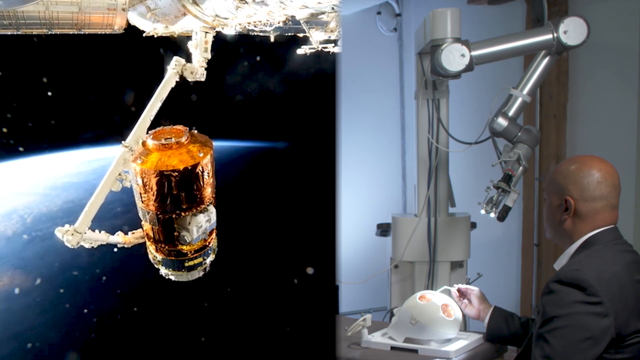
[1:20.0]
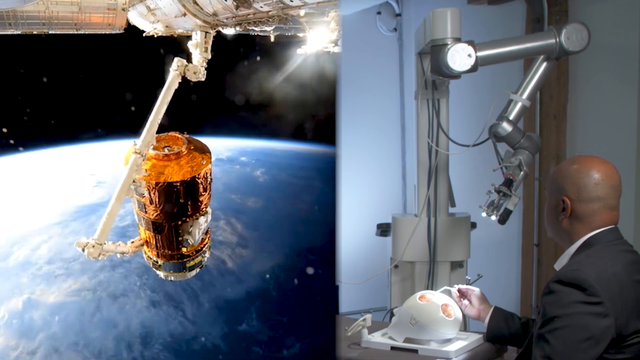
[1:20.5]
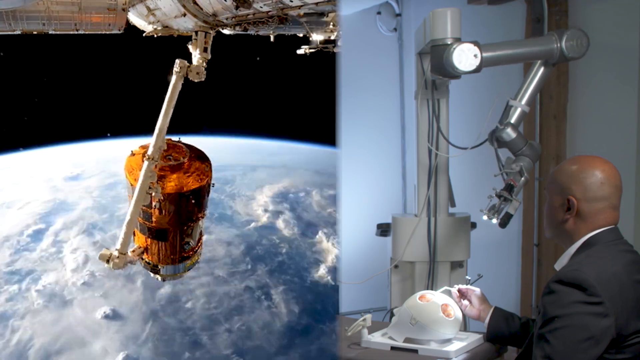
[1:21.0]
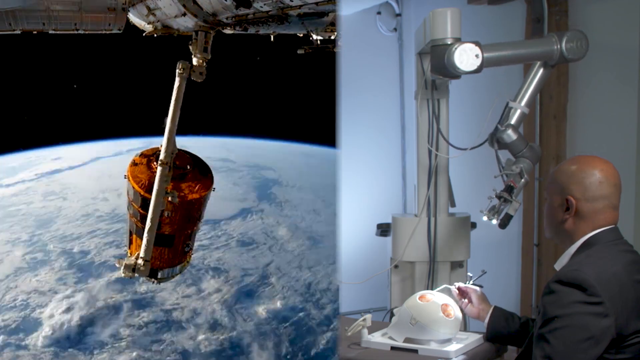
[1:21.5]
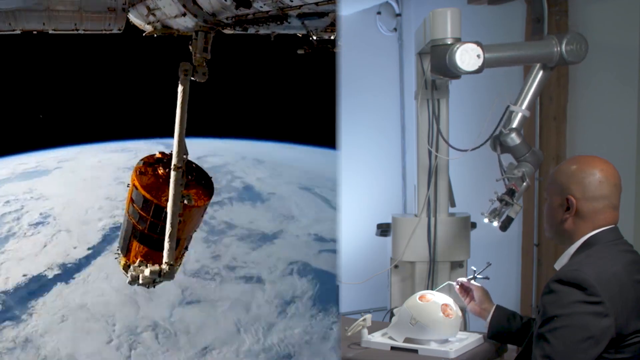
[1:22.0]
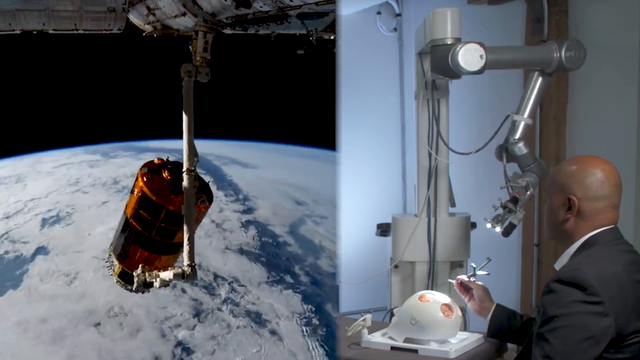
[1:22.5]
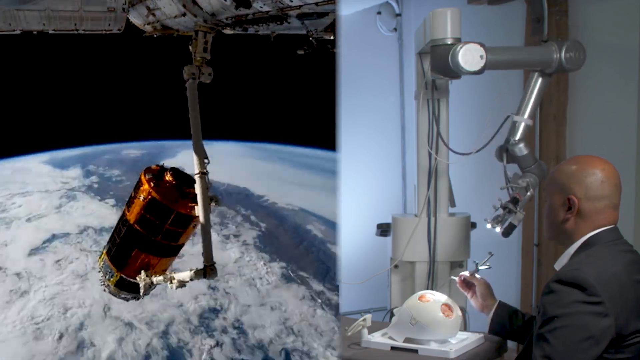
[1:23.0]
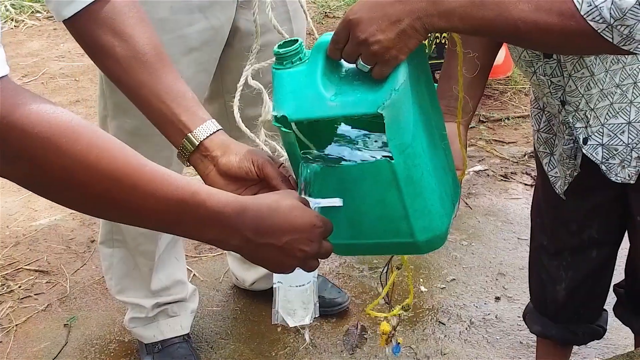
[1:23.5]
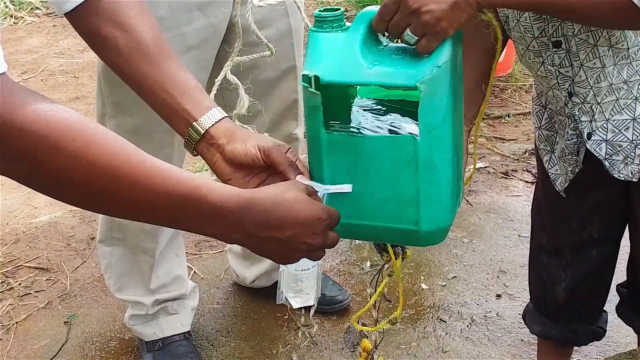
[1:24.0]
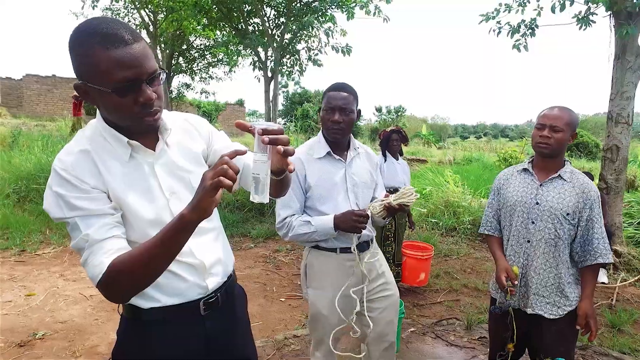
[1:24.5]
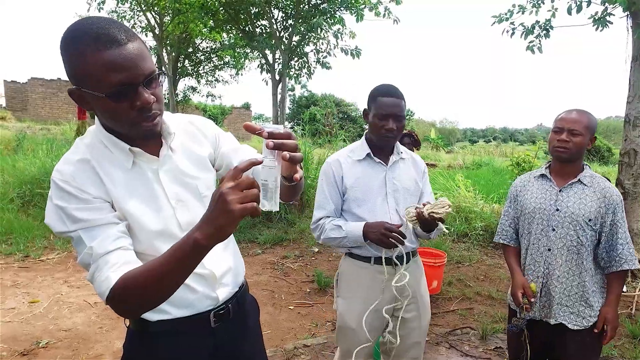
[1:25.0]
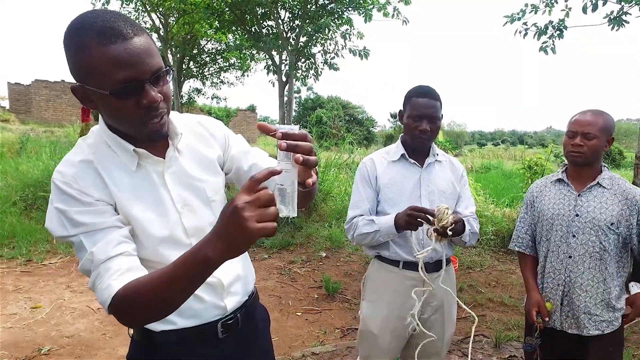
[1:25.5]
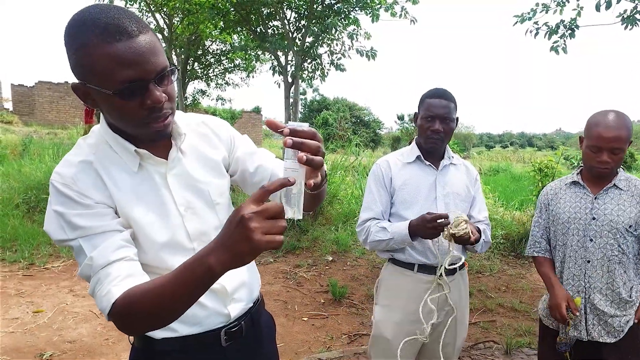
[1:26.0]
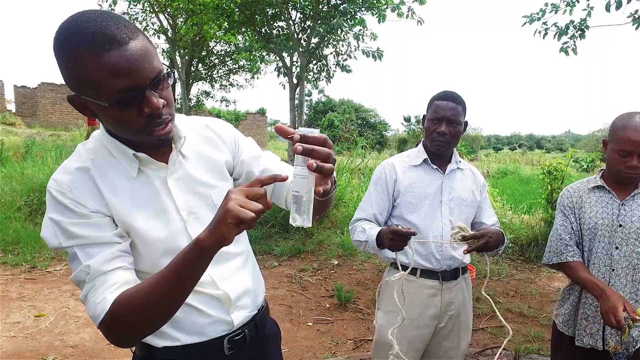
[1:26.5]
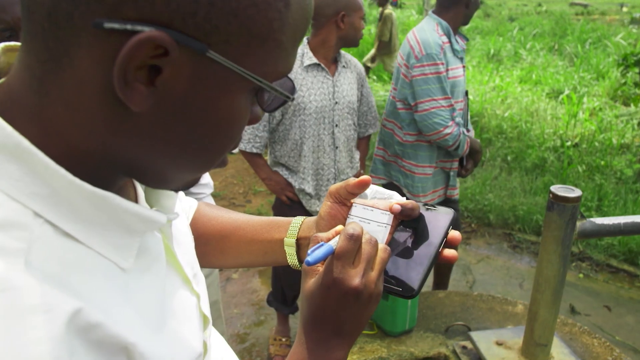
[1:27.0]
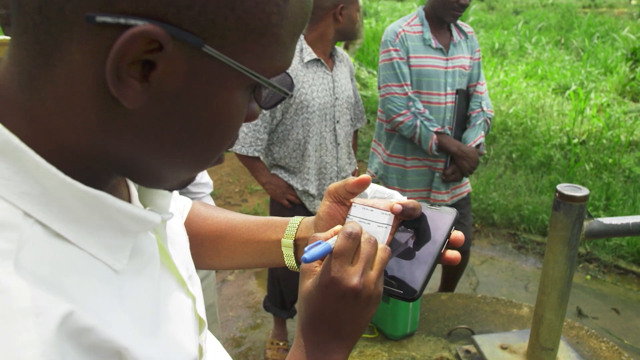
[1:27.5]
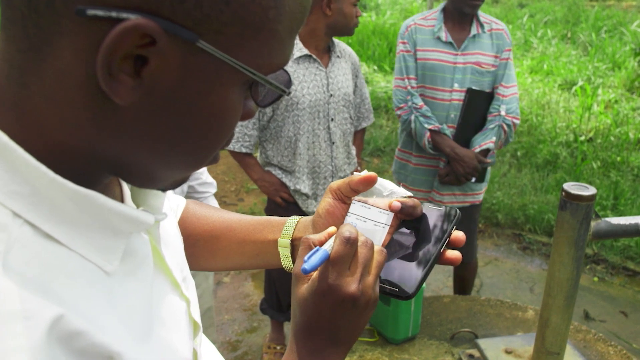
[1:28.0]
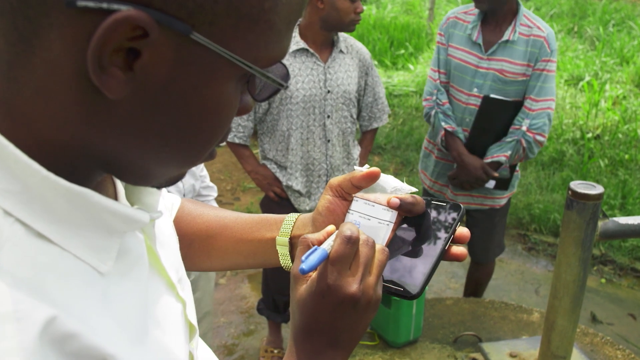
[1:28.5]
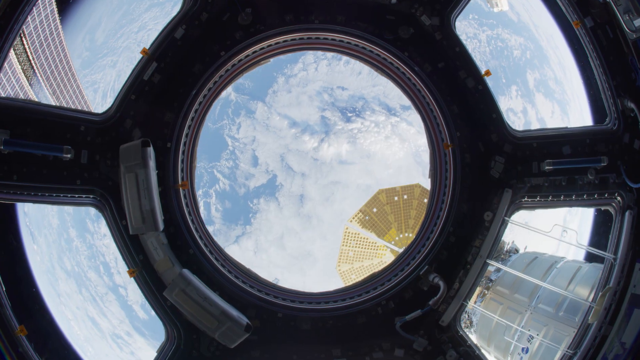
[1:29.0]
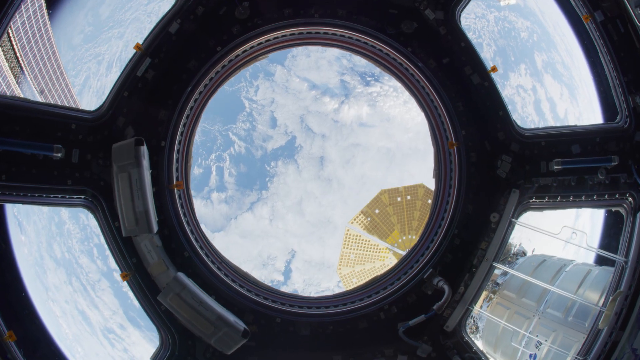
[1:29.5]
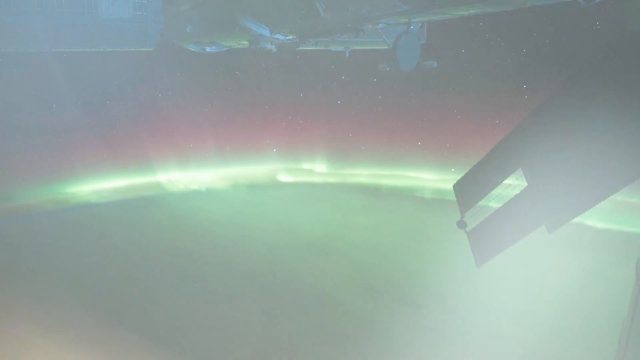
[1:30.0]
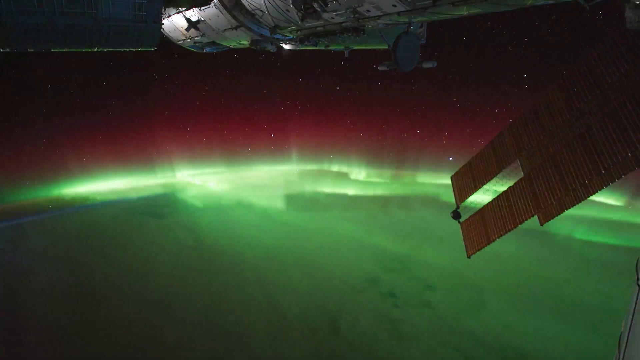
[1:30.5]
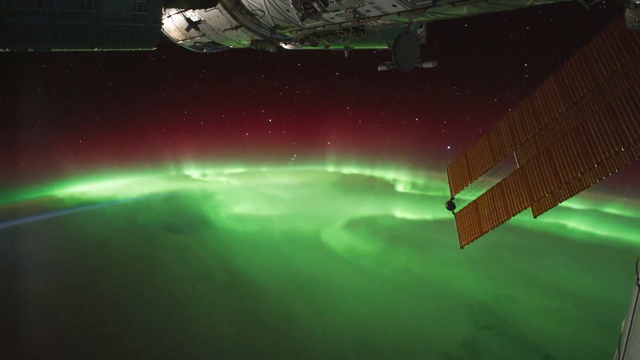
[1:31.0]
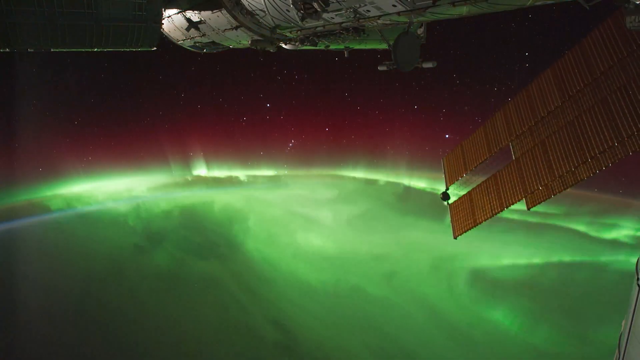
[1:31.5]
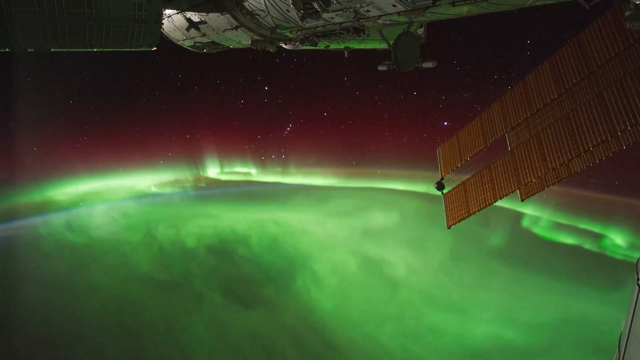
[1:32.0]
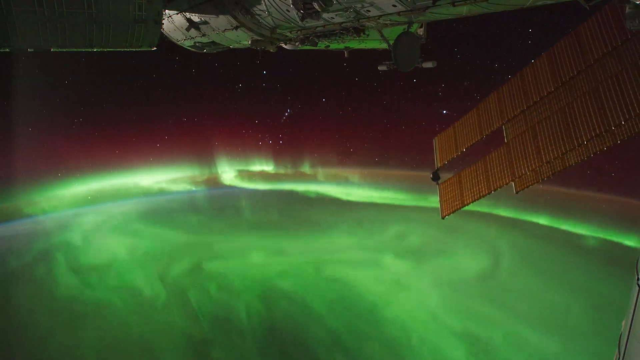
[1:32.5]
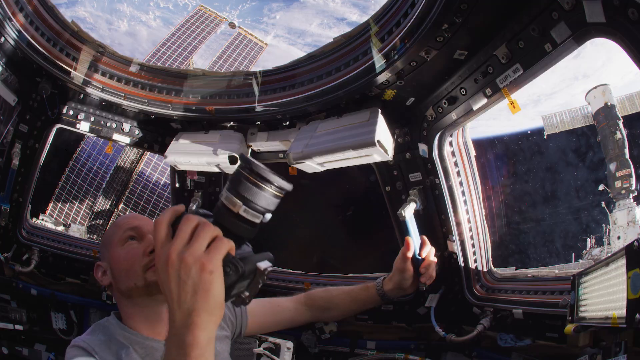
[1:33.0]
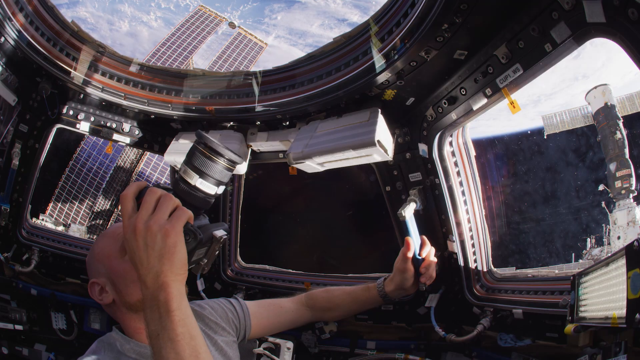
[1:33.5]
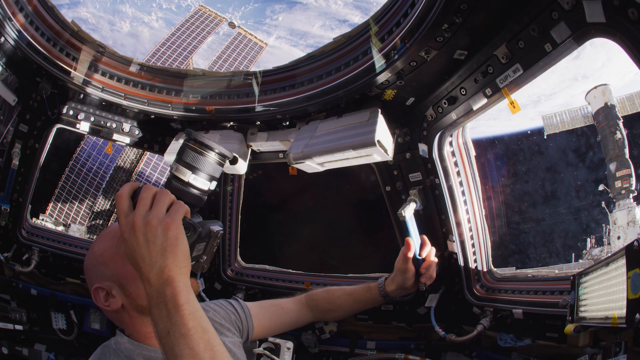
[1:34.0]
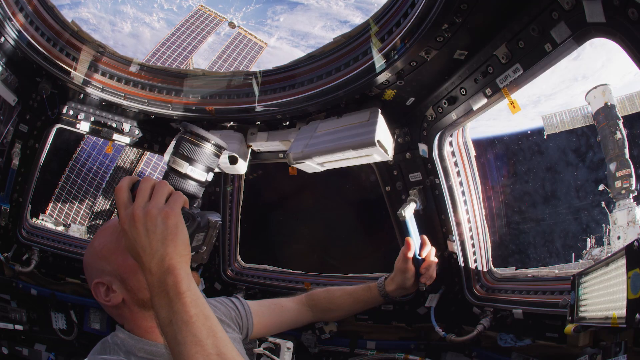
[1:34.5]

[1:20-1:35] A view above the Earth appears on the left-hand side of the screen, with a copper-colored canister hanging from a swing arm. A man in a suit on the side holds a piece of equipment that adjusts as he moves it, and it appears to turn the thing on the outside of the space station as he moves it around, demonstrating how it works. The video cuts to an area on Earth that appears like it could be in Africa, where three well-dressed black men perform an experiment on water with greenery behind them, writing down pieces of information. The imagery then jumps back to the space station, viewing out over green gas that looks almost like an aurora borealis, looking down on Earth.